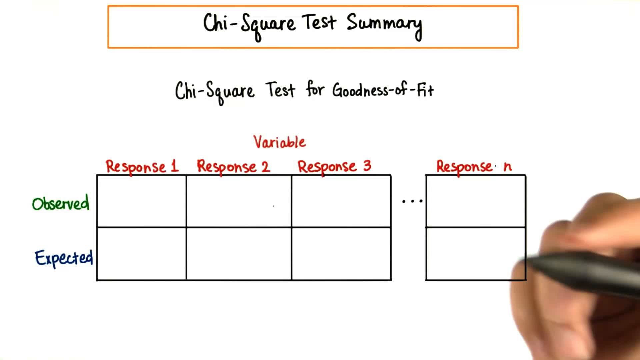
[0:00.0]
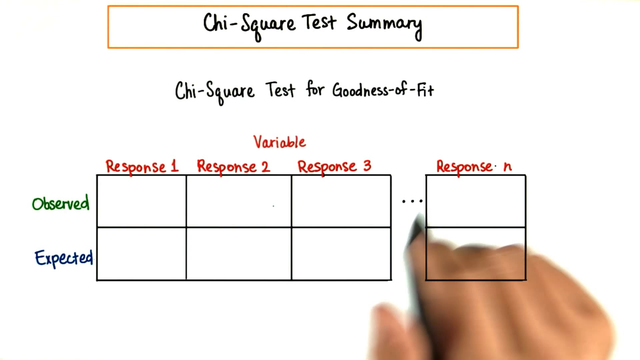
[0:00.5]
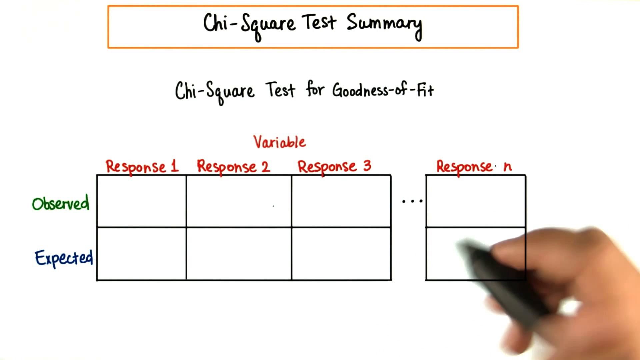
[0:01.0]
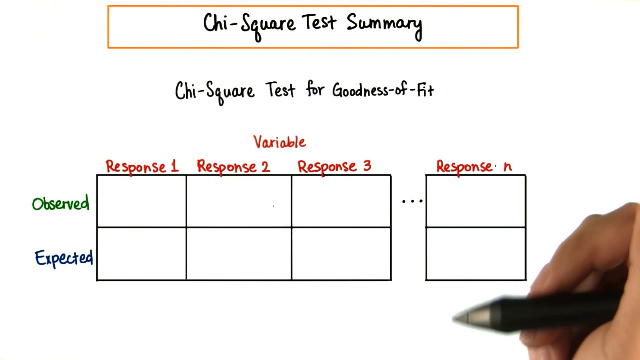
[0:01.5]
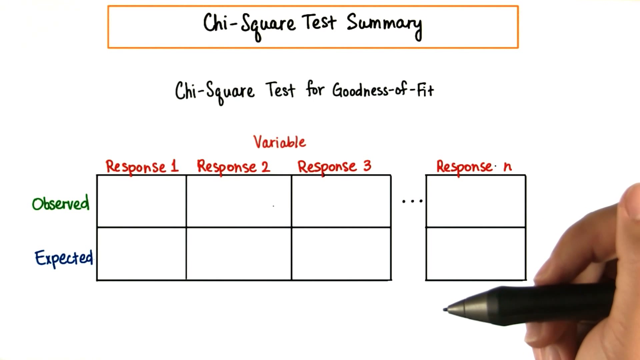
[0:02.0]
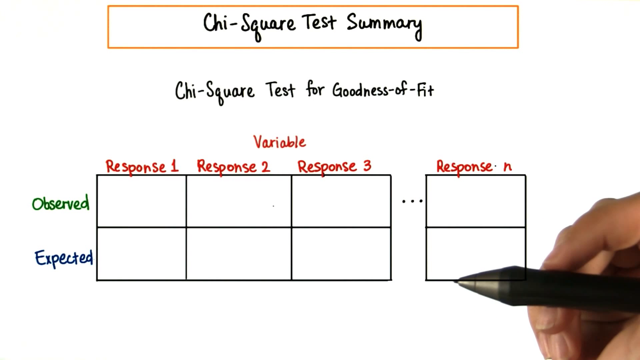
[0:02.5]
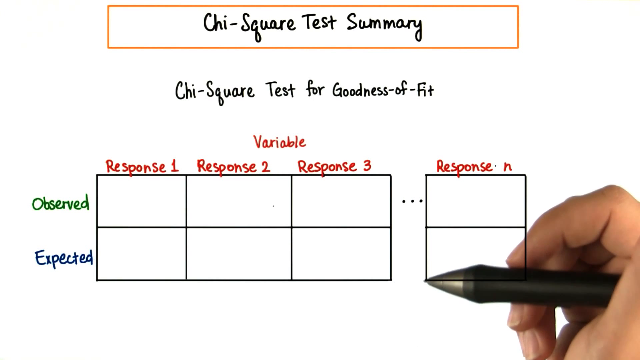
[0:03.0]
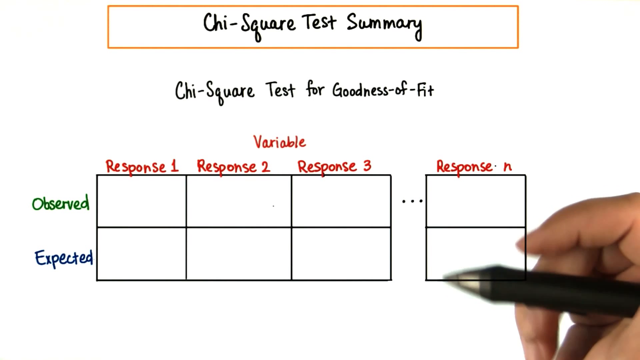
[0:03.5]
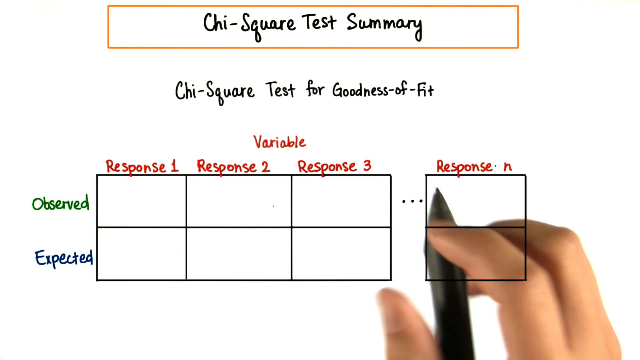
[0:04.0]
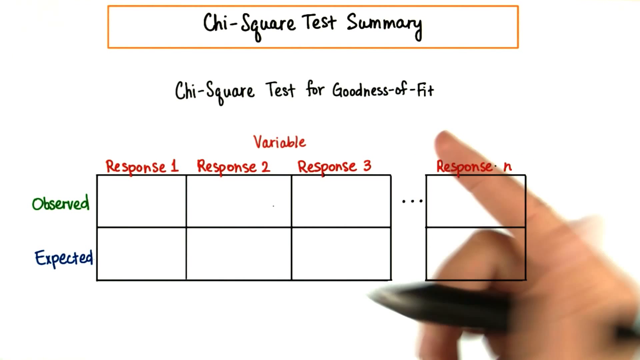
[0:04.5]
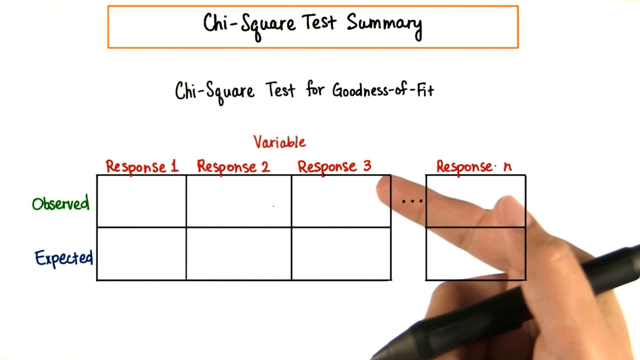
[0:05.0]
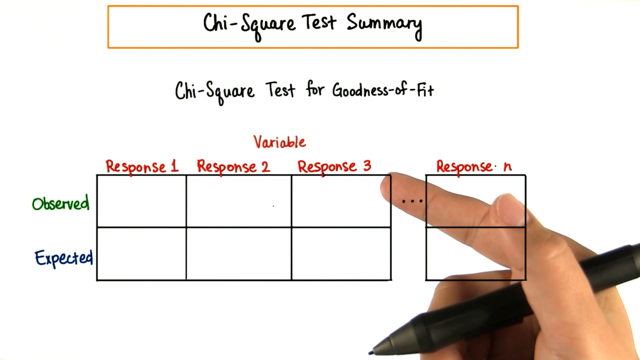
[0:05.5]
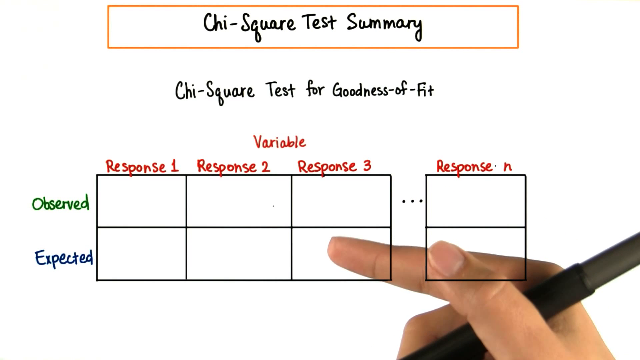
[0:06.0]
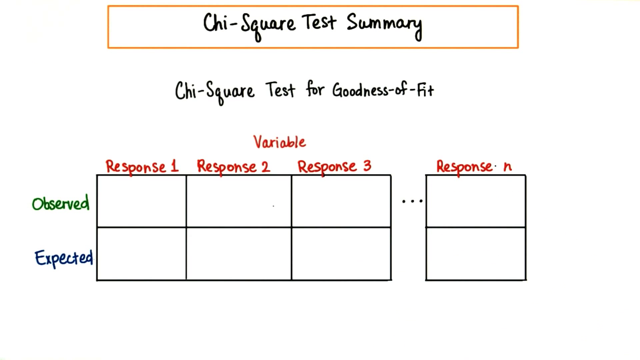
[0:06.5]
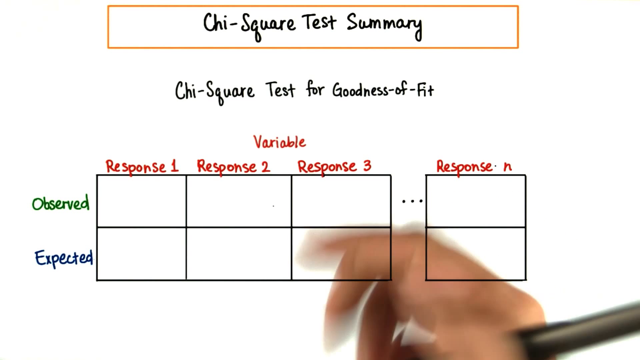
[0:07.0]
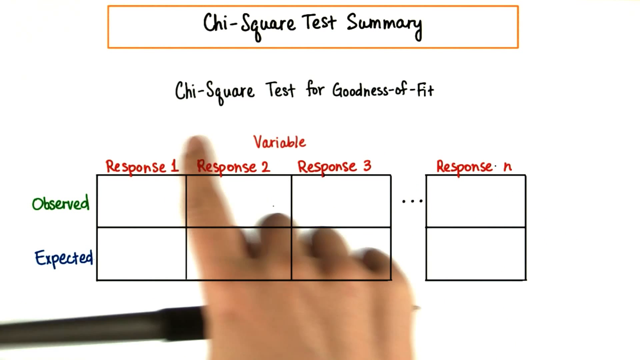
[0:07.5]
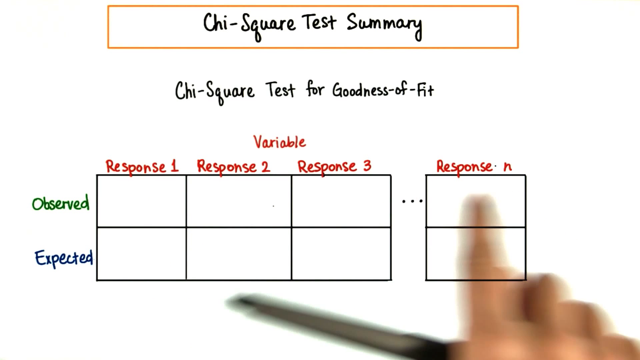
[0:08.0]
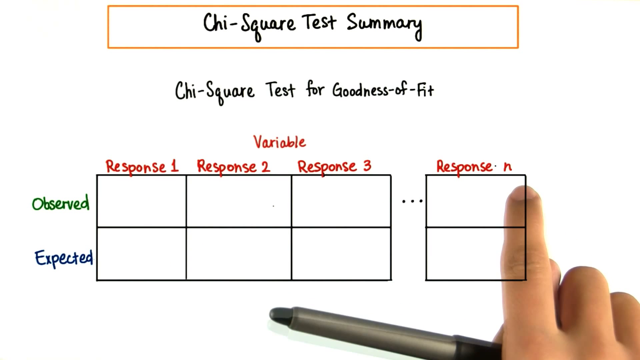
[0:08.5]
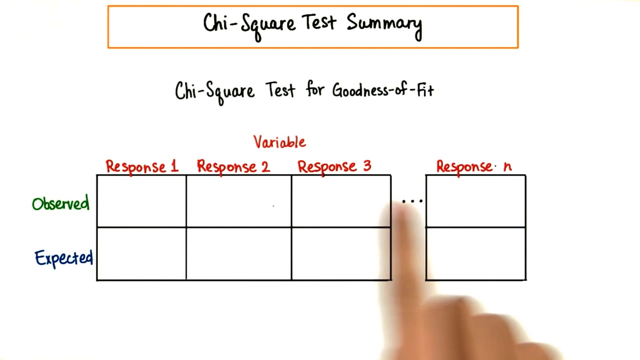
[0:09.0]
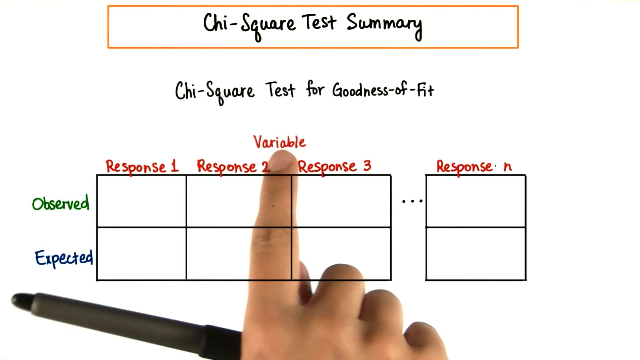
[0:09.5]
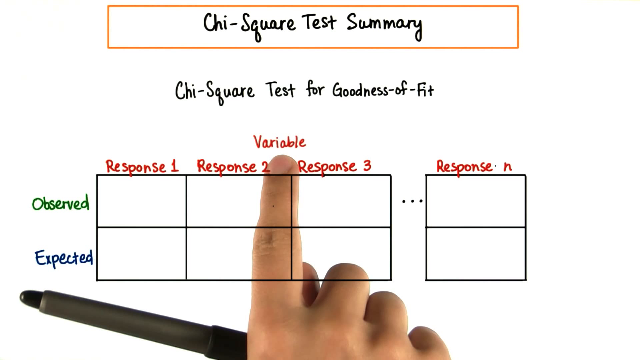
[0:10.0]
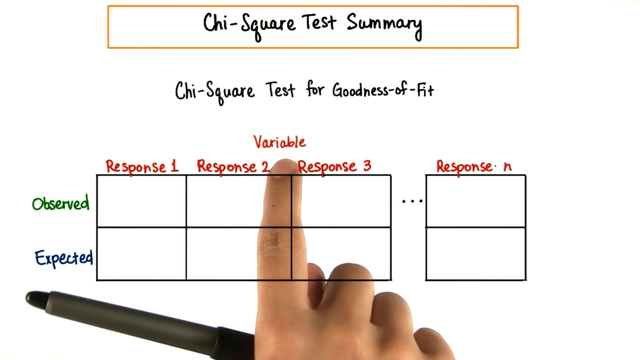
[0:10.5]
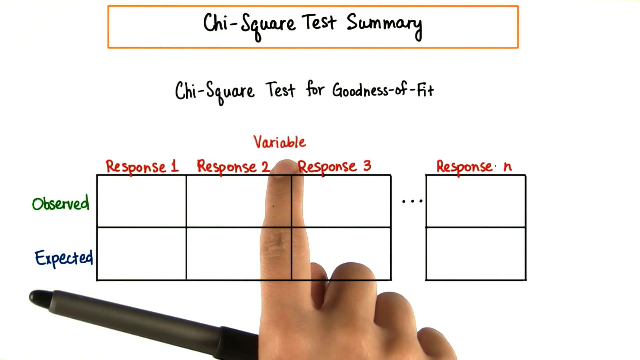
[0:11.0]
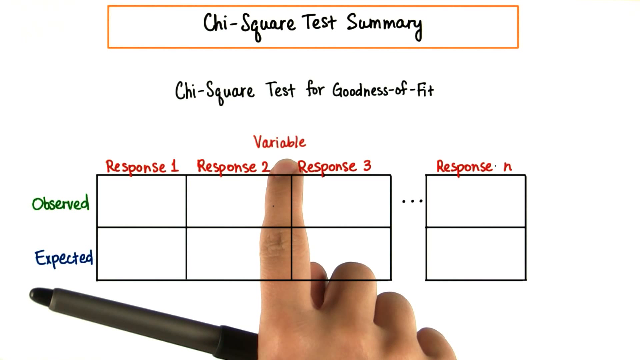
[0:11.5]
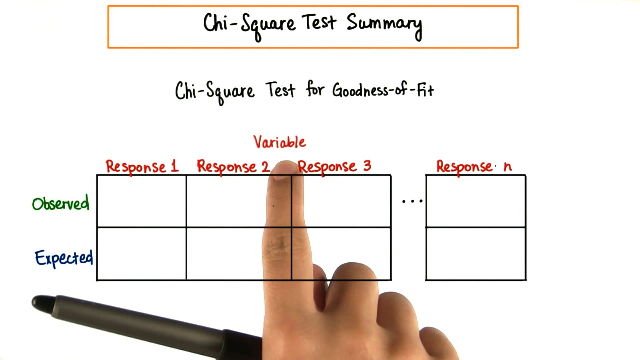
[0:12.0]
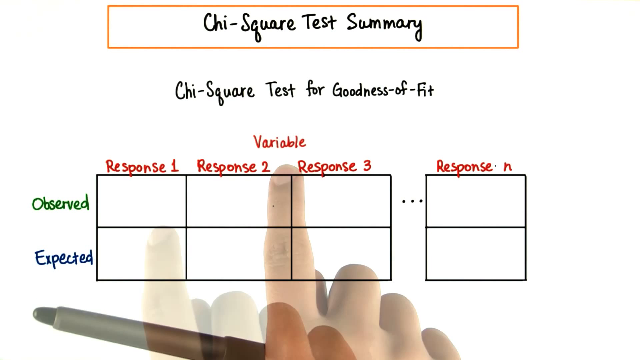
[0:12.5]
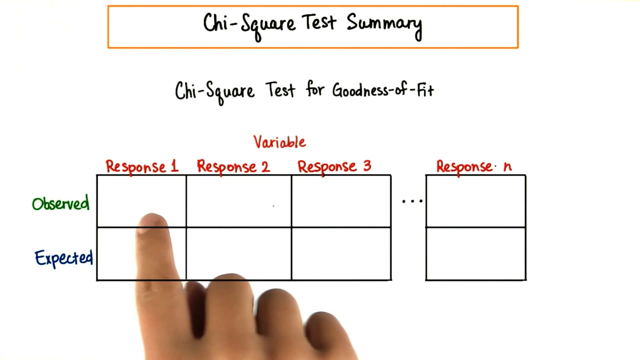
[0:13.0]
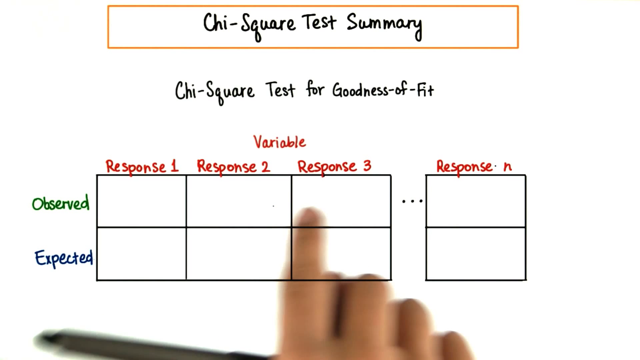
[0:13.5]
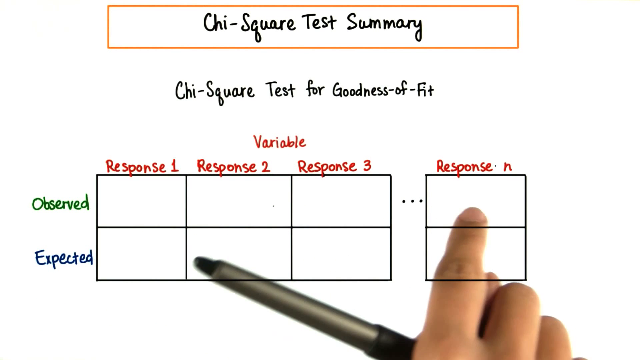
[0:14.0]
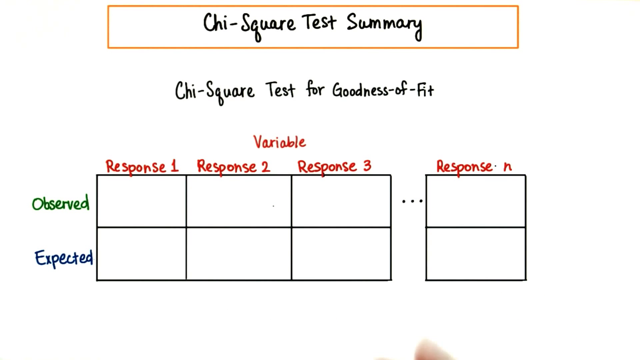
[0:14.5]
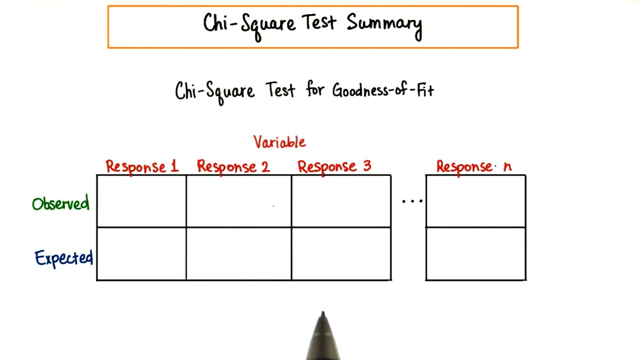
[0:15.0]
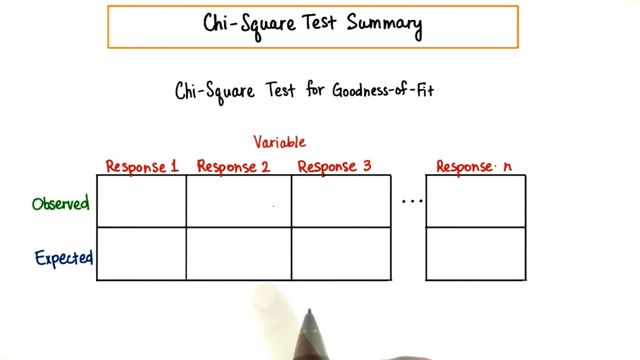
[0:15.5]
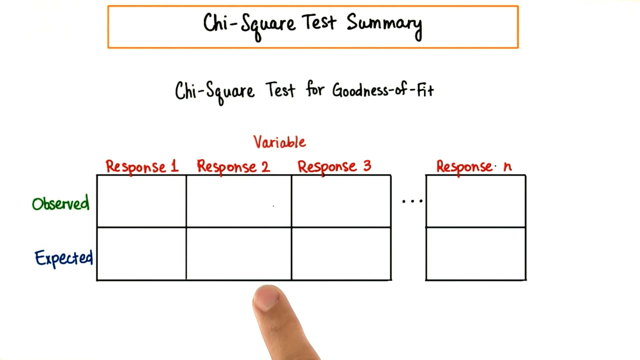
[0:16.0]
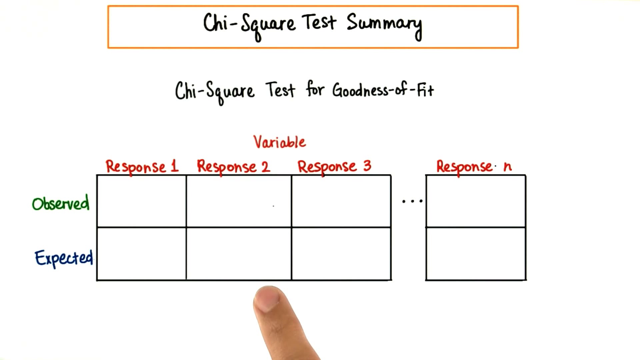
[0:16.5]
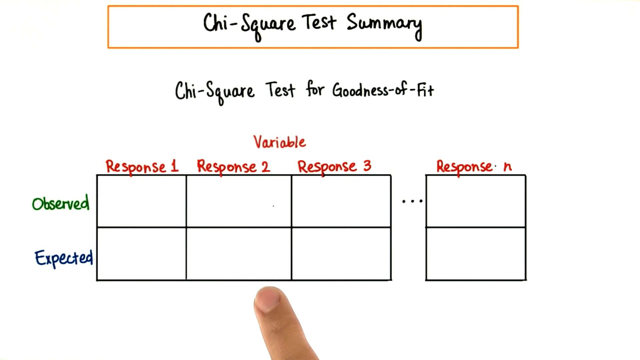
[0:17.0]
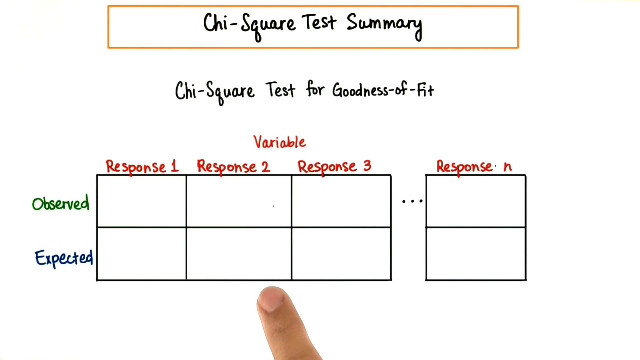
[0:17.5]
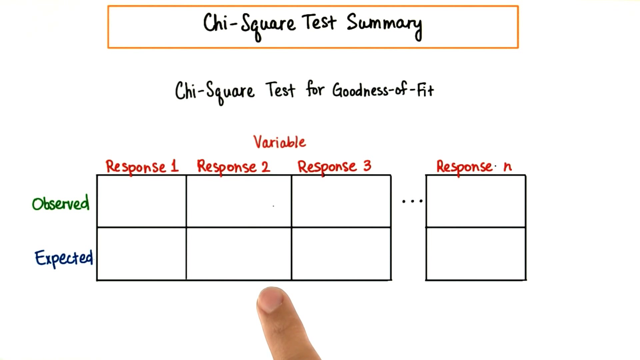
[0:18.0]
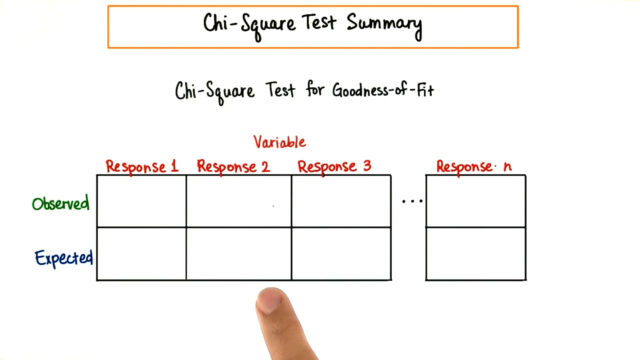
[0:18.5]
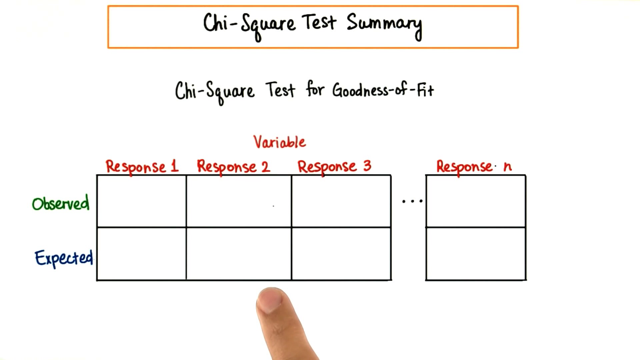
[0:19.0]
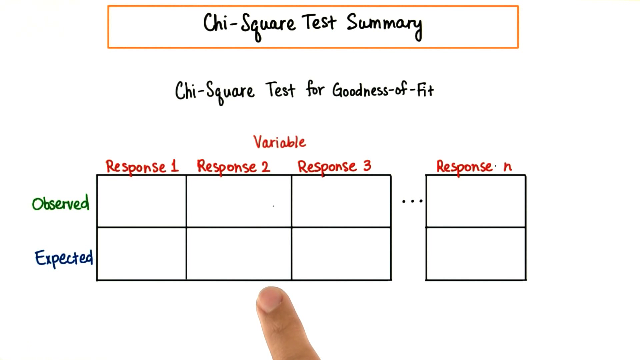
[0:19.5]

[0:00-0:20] Someone is drawing on what looks like a virtual whiteboard: it looks as though they are drawing on an actual whiteboard, with a layout overlaid in front of where he draws, so his hand is able to go under the text. At the top, "chi-square test summary" appears in black text inside a yellow heading rectangle. Right below that it says "chi-square test for goodness of fit", and below that is a set of rows and columns with different things in them.